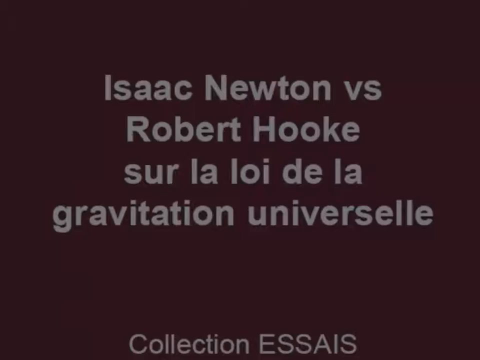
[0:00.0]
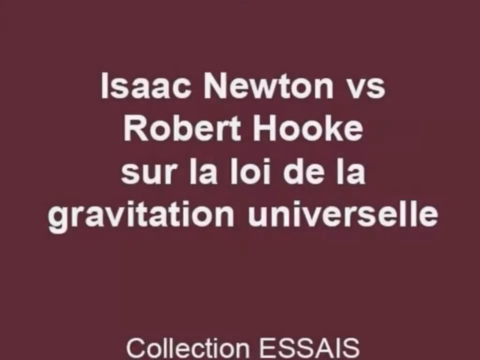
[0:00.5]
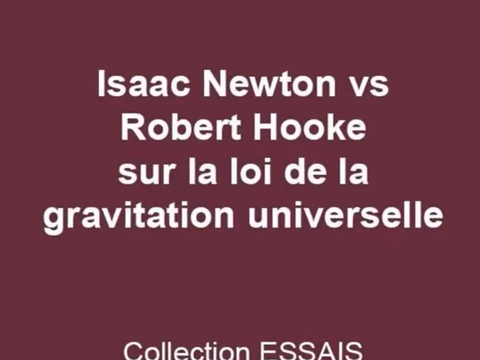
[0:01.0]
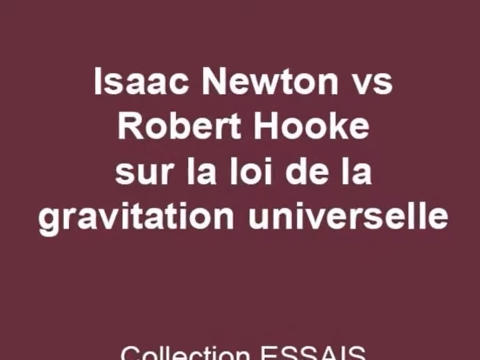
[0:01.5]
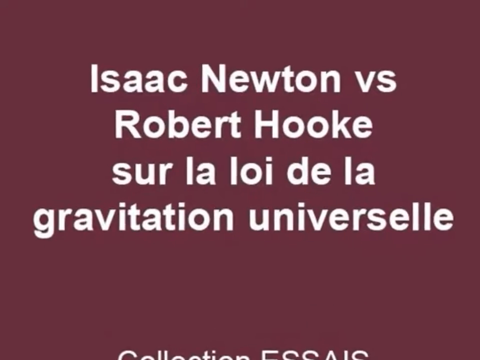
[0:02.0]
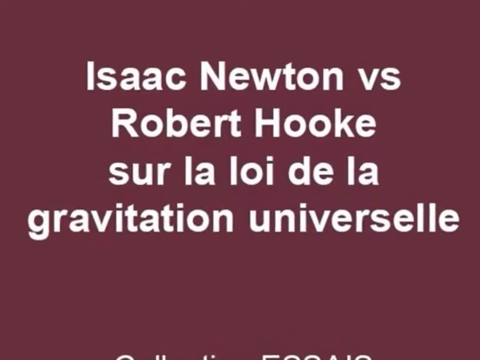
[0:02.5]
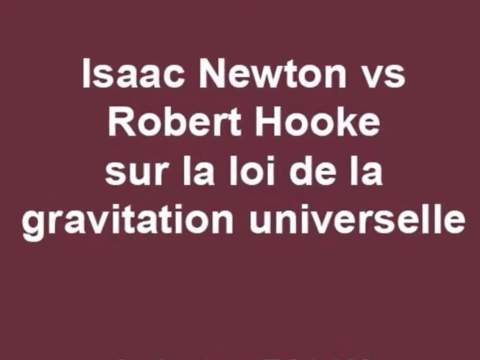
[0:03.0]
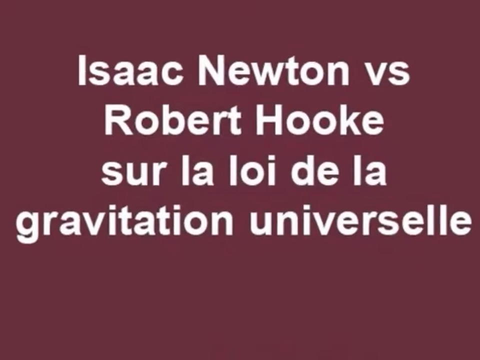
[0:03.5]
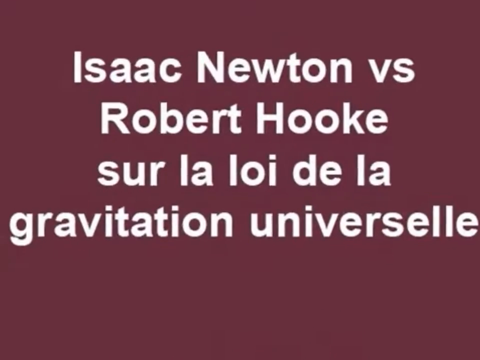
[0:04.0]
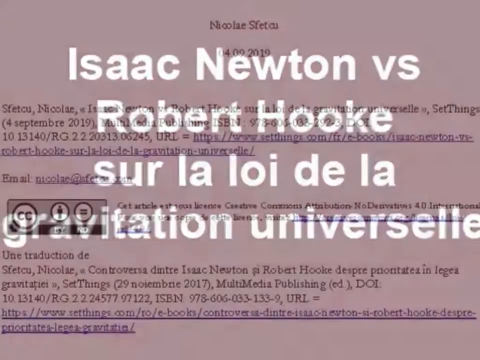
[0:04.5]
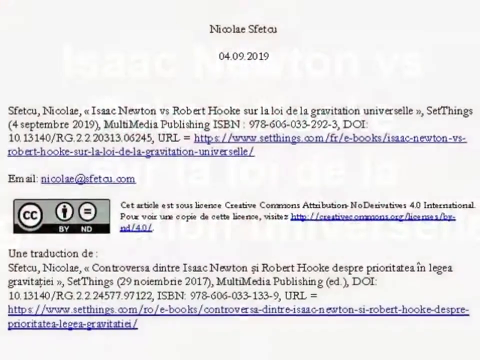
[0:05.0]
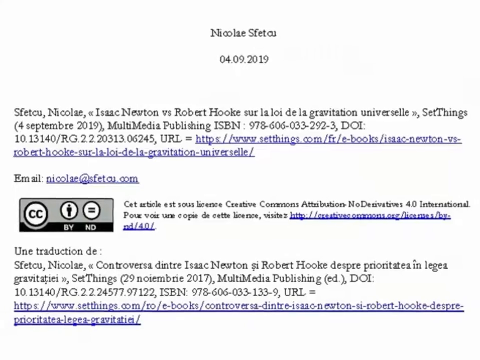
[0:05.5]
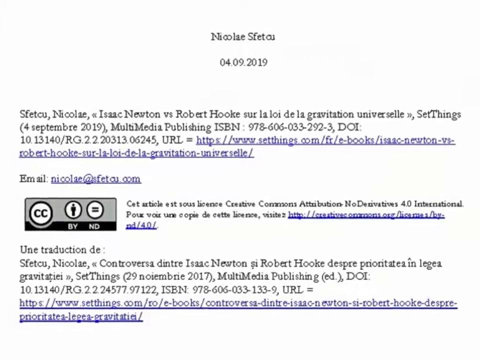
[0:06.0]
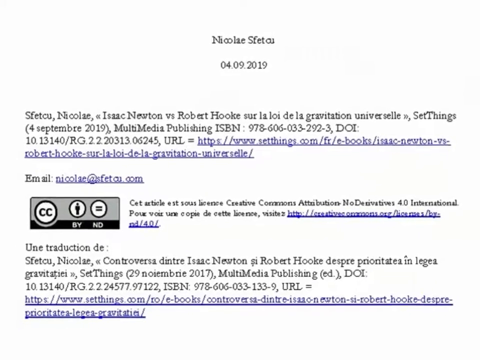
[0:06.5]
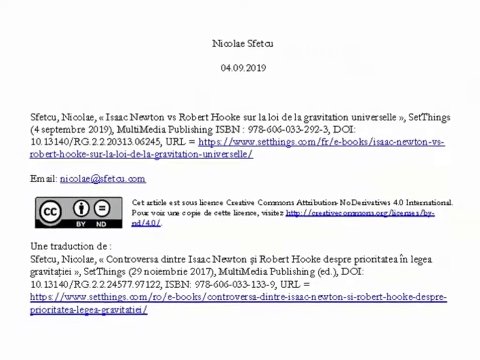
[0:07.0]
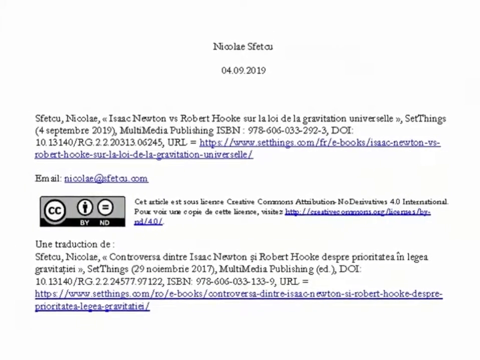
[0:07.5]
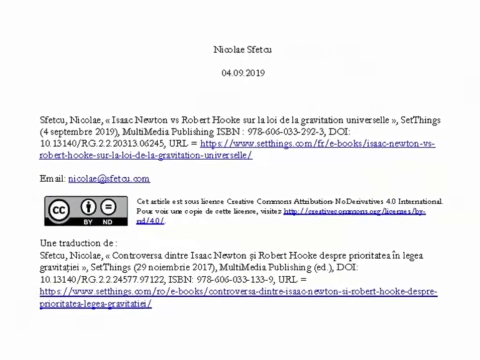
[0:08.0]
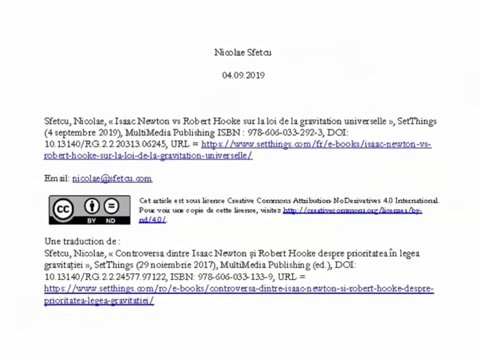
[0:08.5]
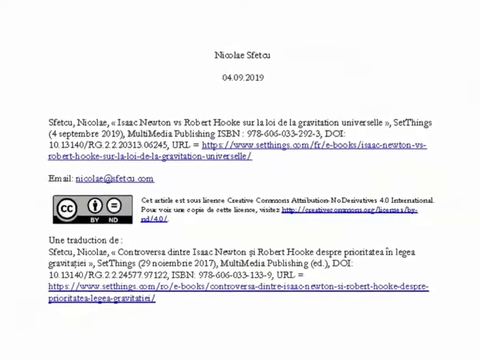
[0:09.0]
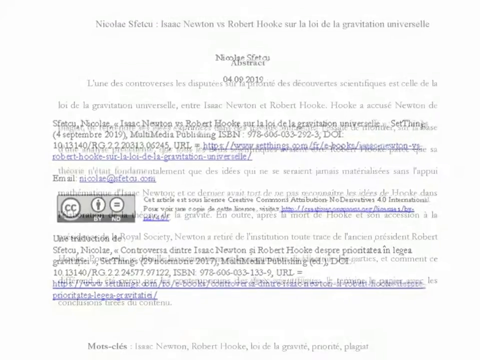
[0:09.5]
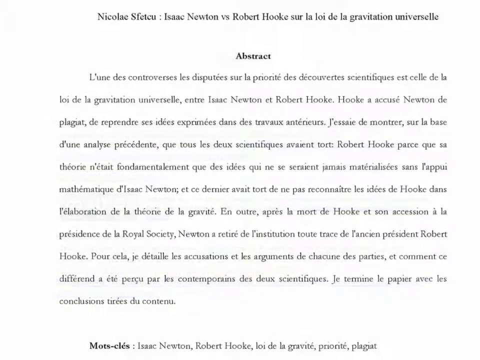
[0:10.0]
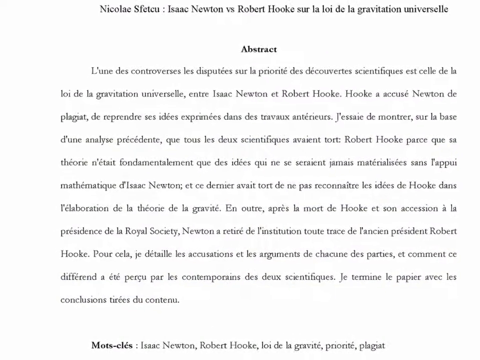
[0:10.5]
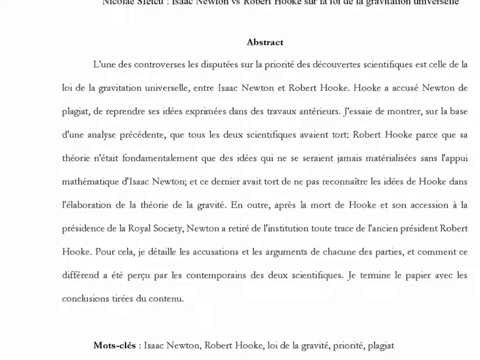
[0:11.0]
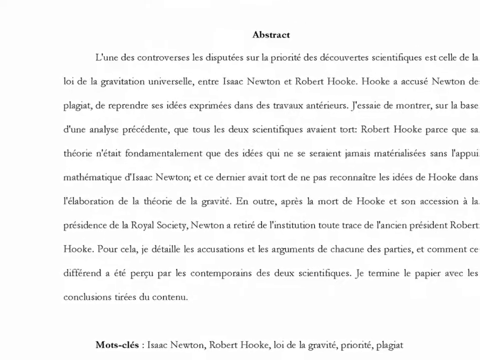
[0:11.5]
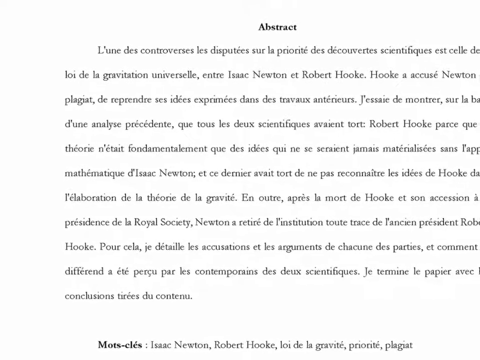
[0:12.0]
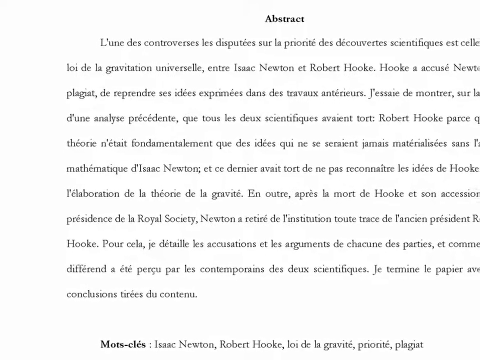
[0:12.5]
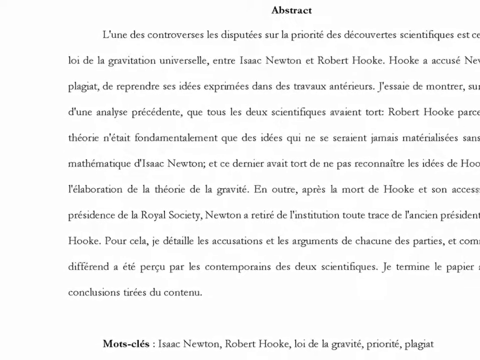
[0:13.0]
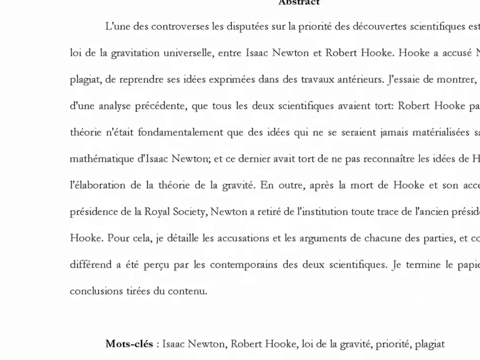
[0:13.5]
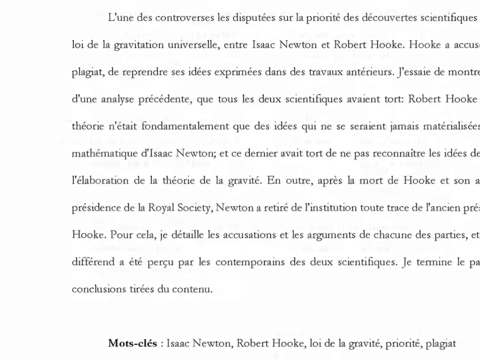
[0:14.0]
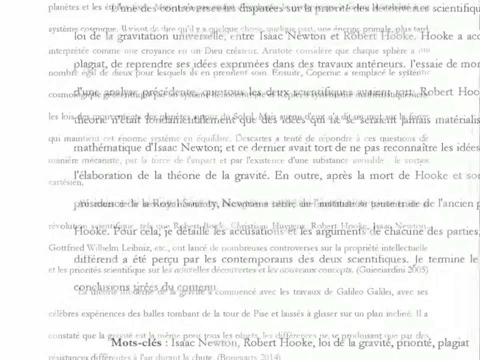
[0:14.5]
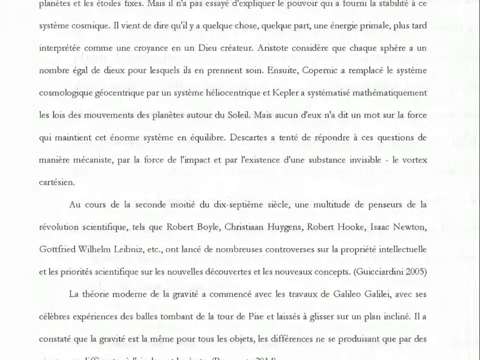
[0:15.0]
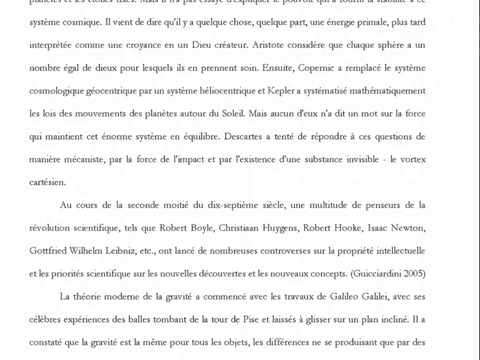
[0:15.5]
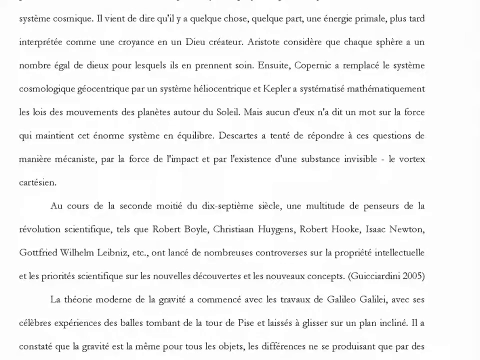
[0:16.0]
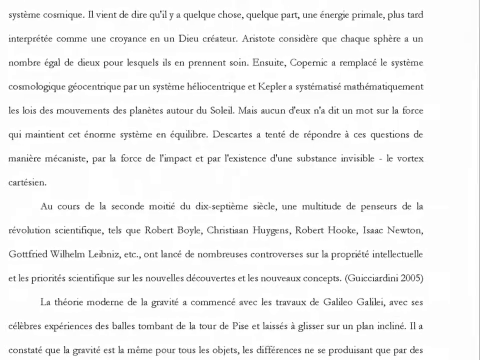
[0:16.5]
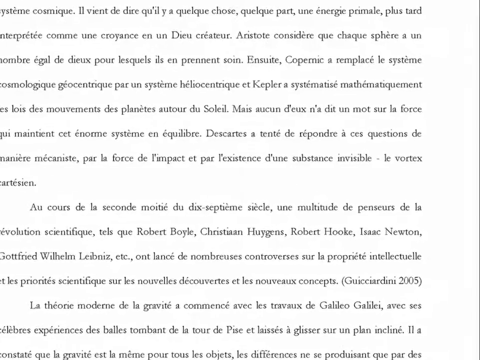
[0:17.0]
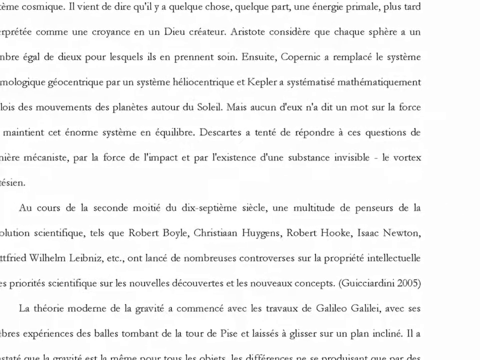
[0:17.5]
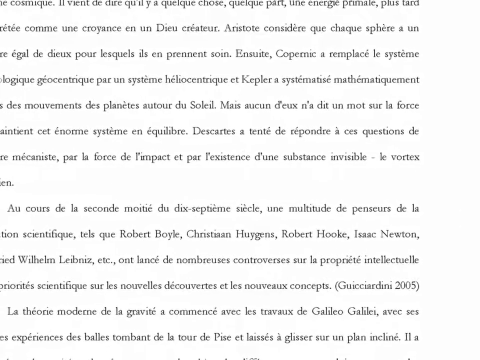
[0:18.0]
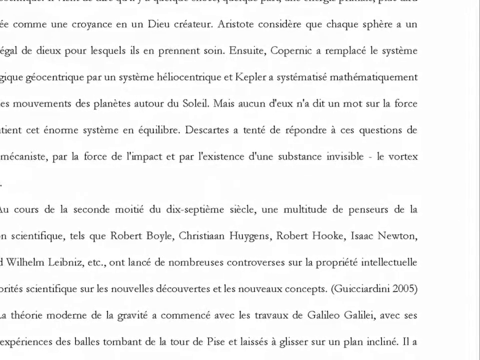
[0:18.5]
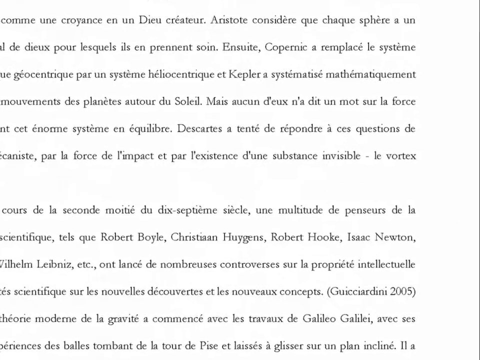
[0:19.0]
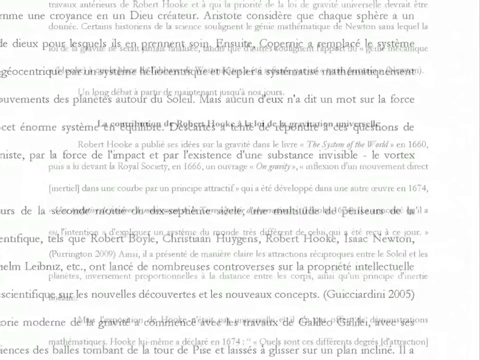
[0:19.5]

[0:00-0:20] The video opens with a title reading "Isaac Newton vs. Robert Hooke," followed by text that apparently is in French and includes the words "de la gravitation Universal." The footage looks like it is possibly black and white. From the title it cuts to some kind of printed or written document, which appears to name an author called Nicolai. The document says "abstract" and "Isaac Newton Robert Hooke," and it seems to mention experiments. The video looks somewhat old, with old-looking titling, and the document also possibly looks somewhat old.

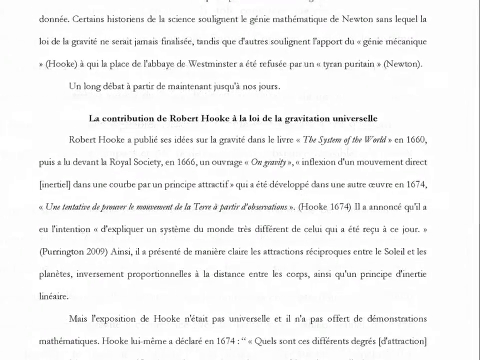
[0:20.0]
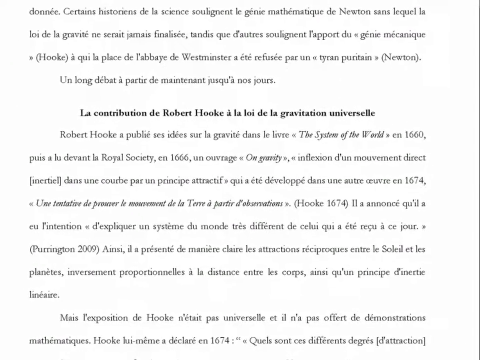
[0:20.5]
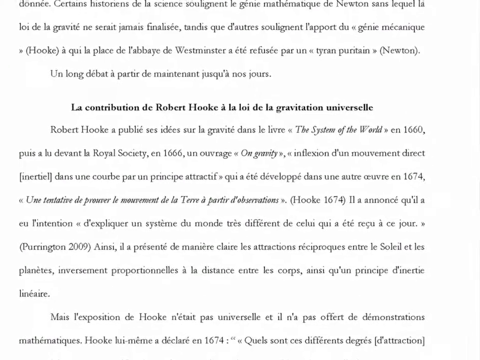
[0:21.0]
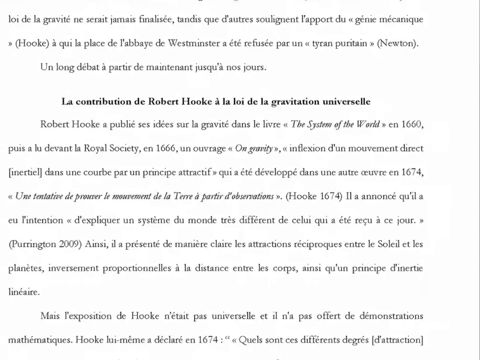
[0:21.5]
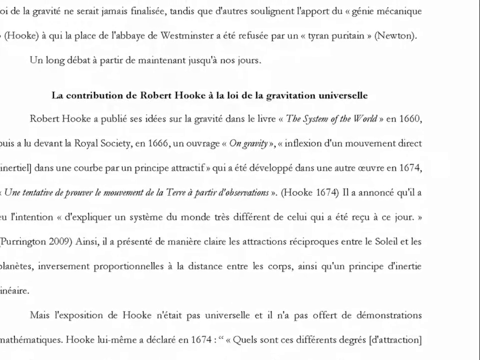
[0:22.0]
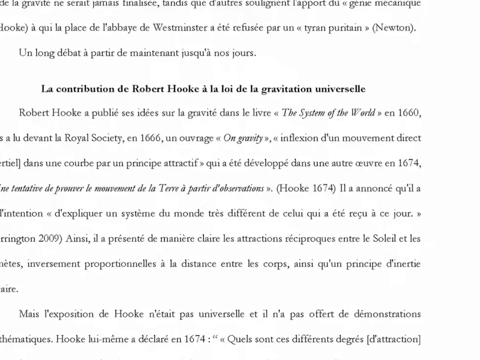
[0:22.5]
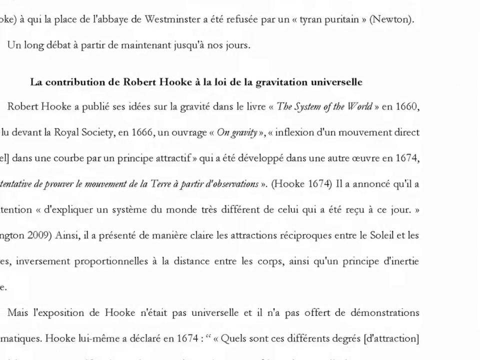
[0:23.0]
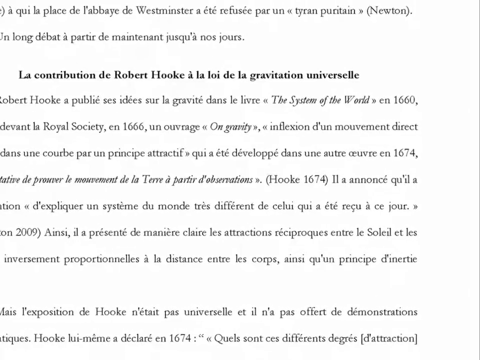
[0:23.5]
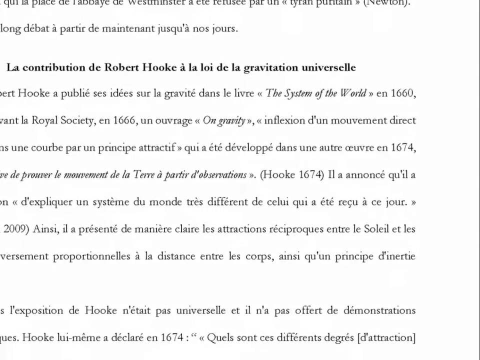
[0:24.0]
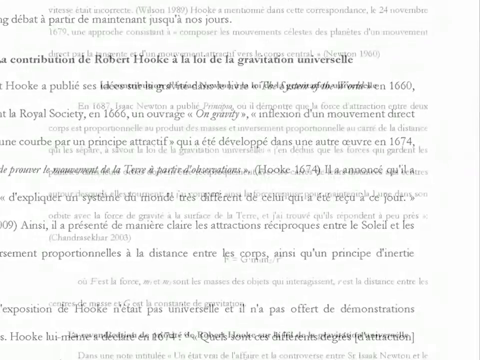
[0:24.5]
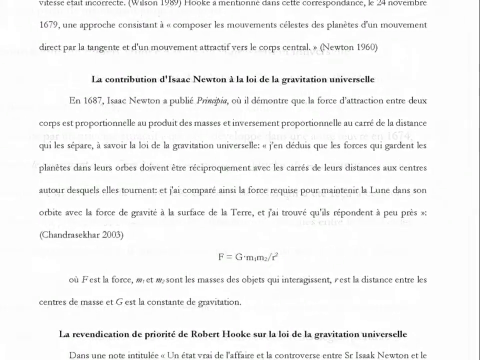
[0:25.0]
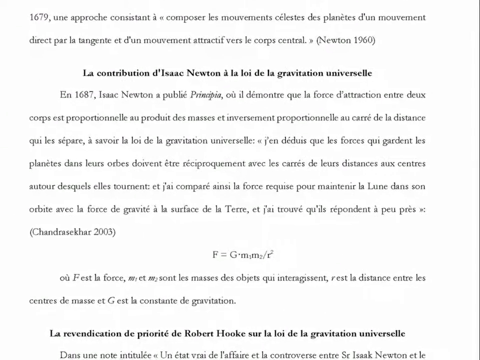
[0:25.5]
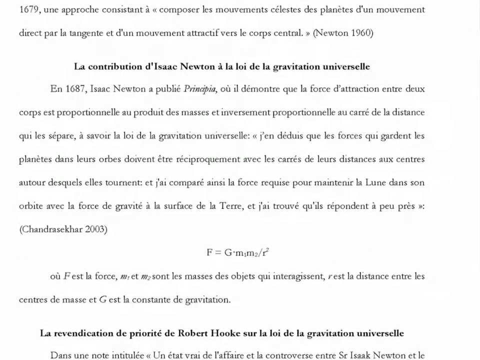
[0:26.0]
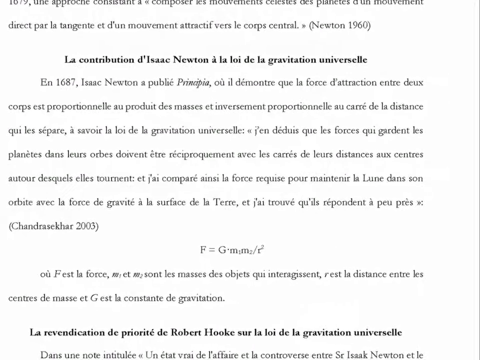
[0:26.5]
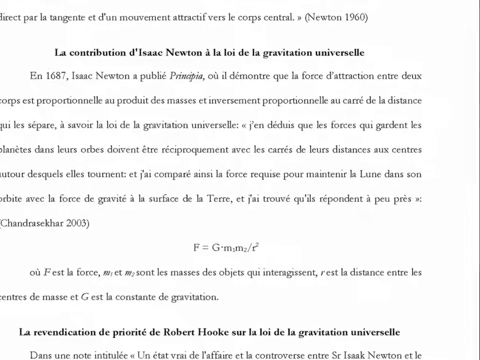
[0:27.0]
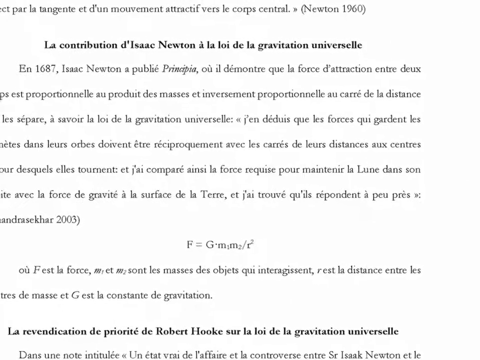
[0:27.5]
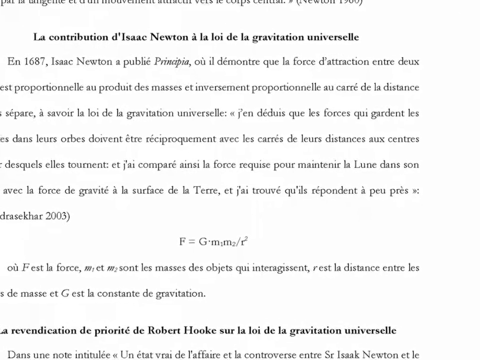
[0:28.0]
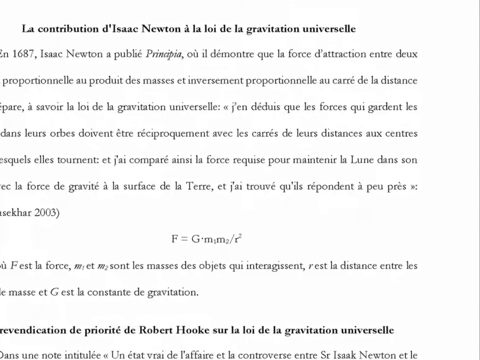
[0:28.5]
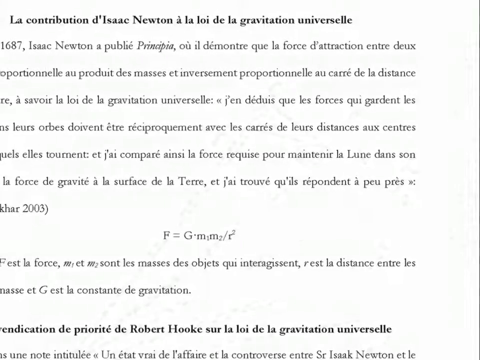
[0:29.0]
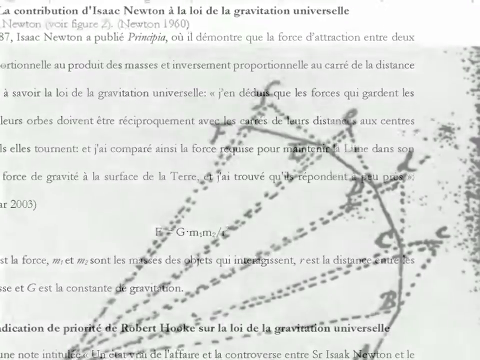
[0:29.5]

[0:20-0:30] The camera looks into the document, which mentions the contribution of Robert Hooke and the contribution of Isaac Newton to the universal law of gravitation, with the words "la loi." The text refers to a society in 1660 and shows a couple of dates, 1674 and 1687.